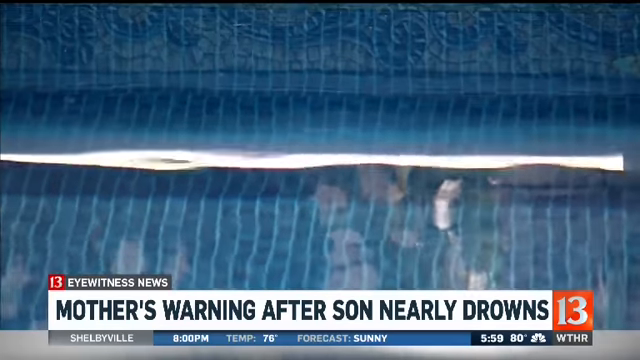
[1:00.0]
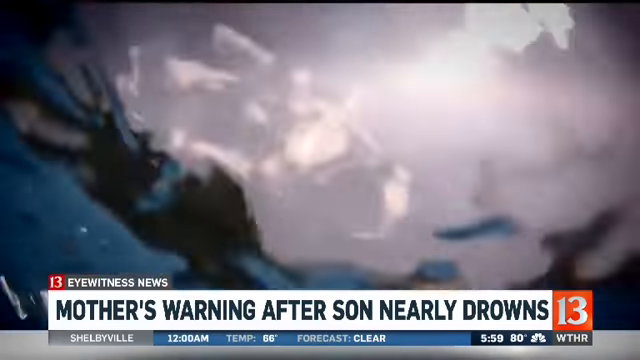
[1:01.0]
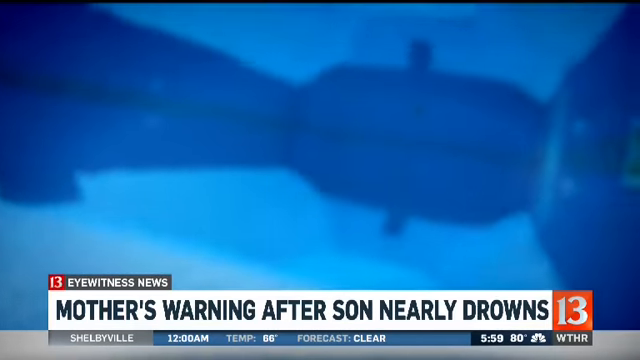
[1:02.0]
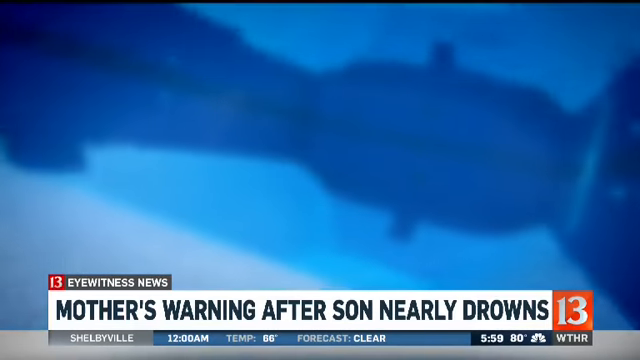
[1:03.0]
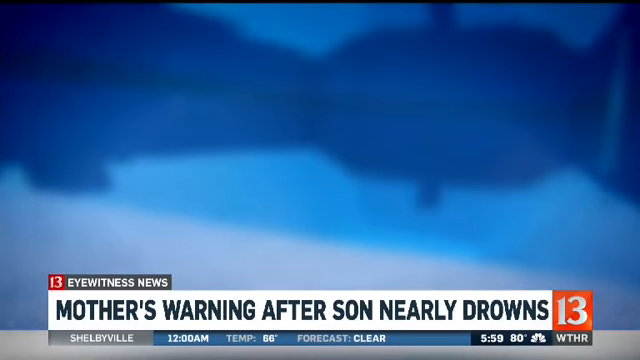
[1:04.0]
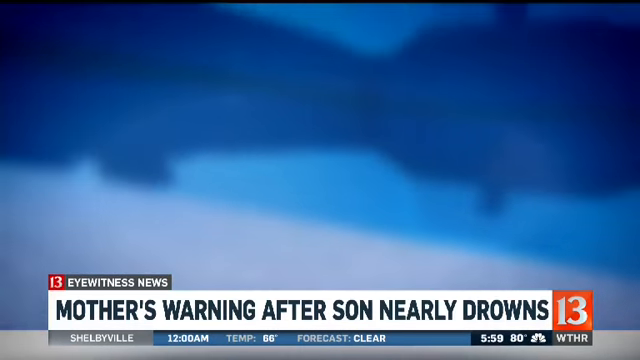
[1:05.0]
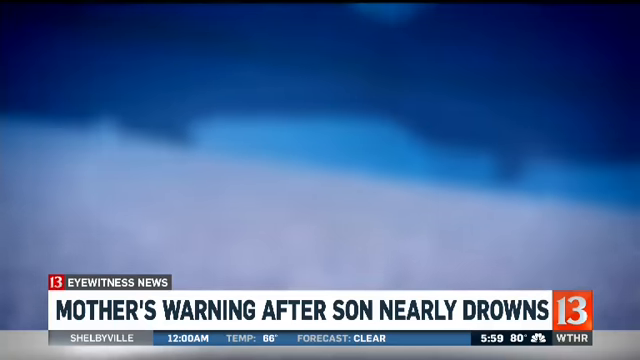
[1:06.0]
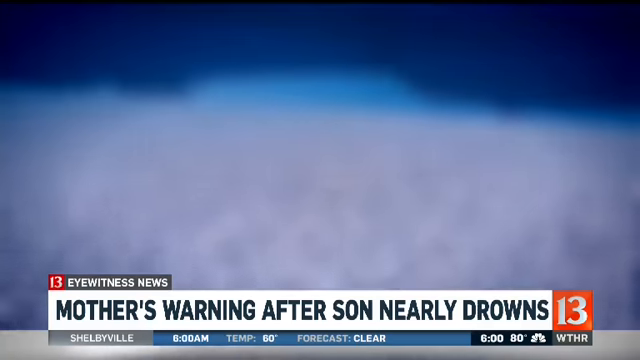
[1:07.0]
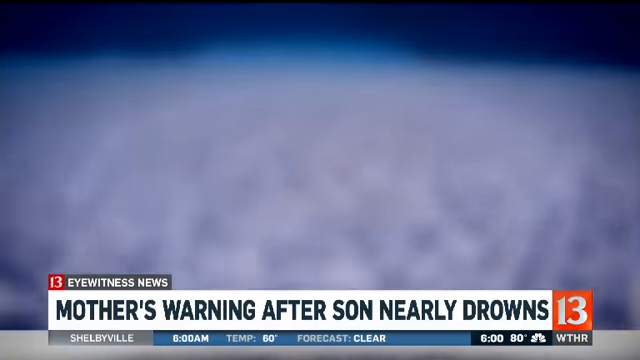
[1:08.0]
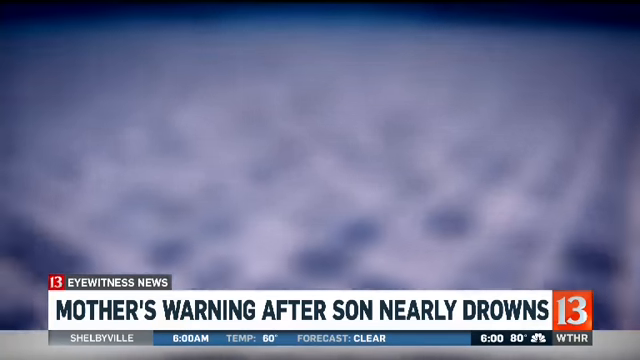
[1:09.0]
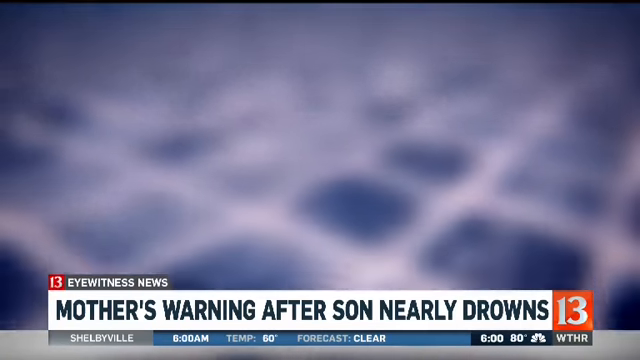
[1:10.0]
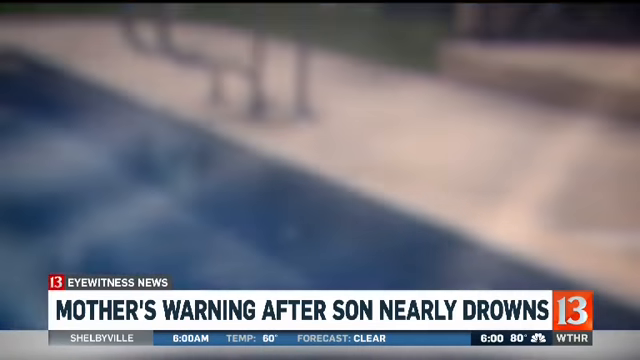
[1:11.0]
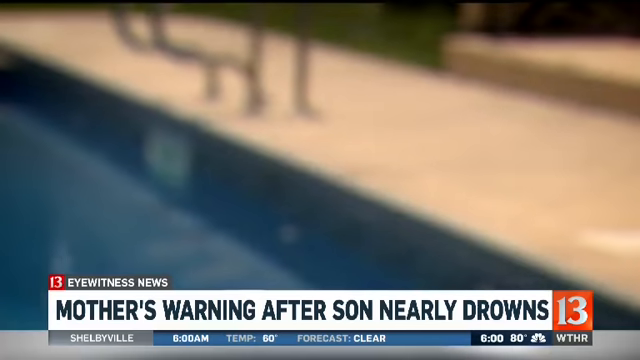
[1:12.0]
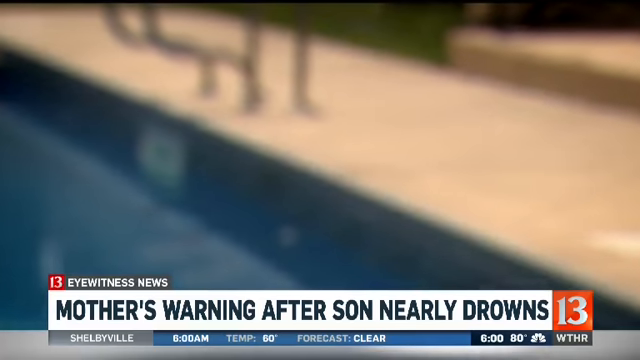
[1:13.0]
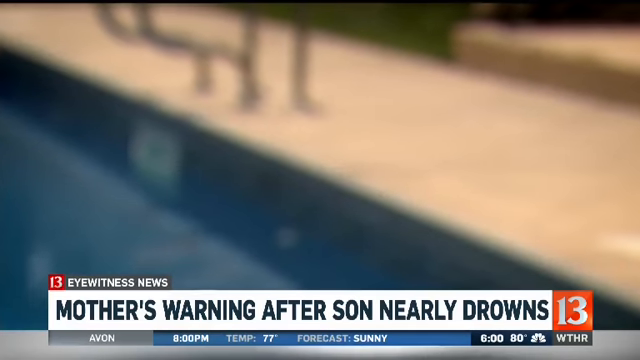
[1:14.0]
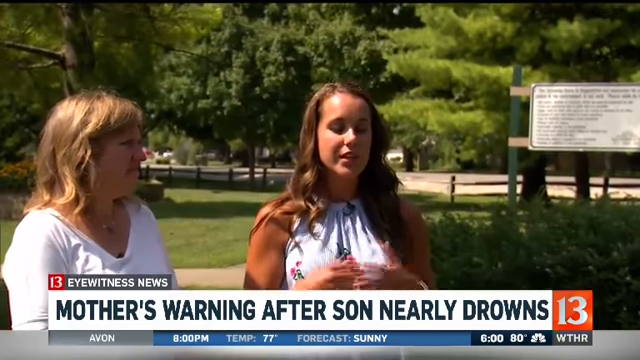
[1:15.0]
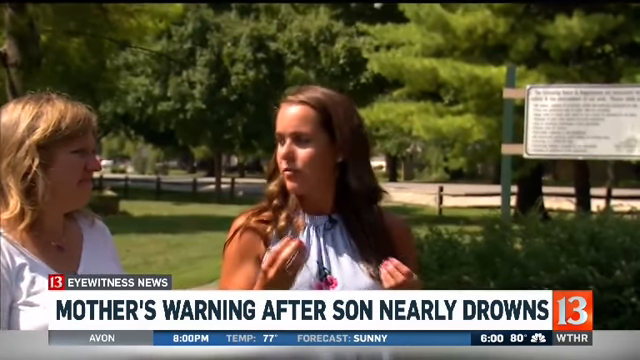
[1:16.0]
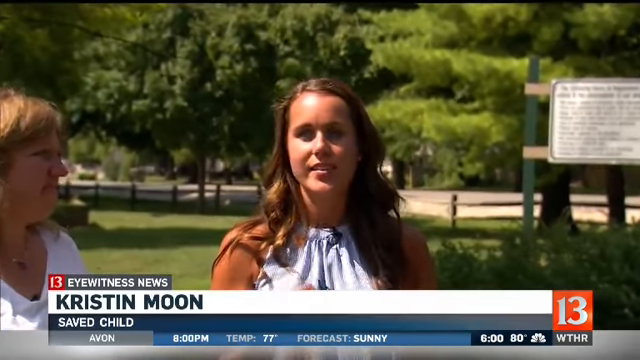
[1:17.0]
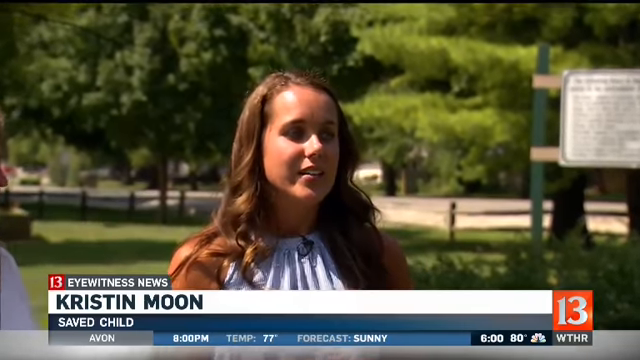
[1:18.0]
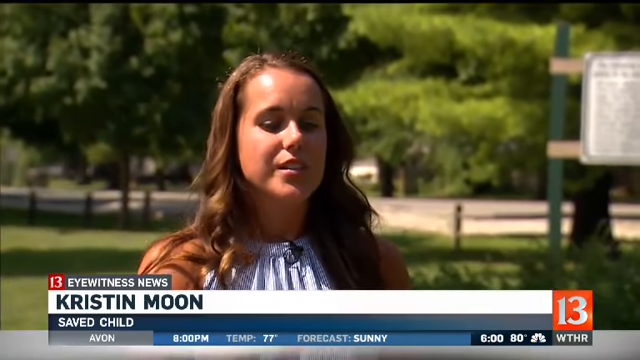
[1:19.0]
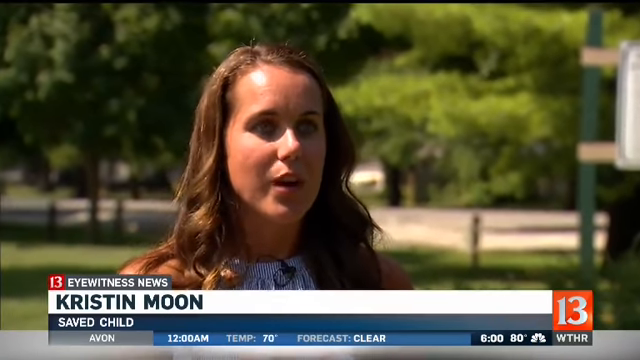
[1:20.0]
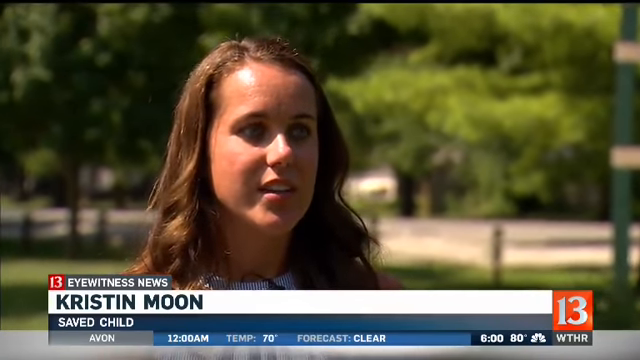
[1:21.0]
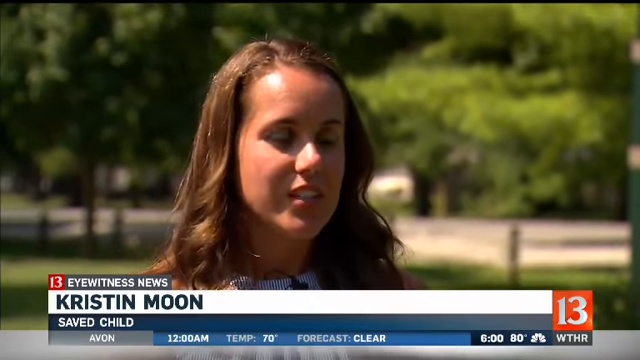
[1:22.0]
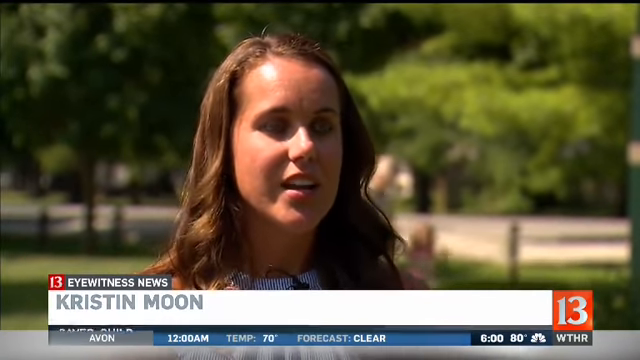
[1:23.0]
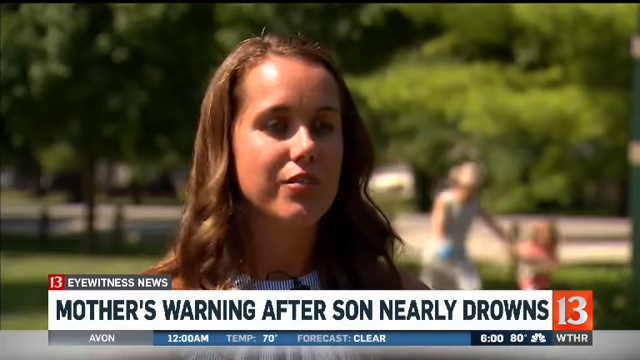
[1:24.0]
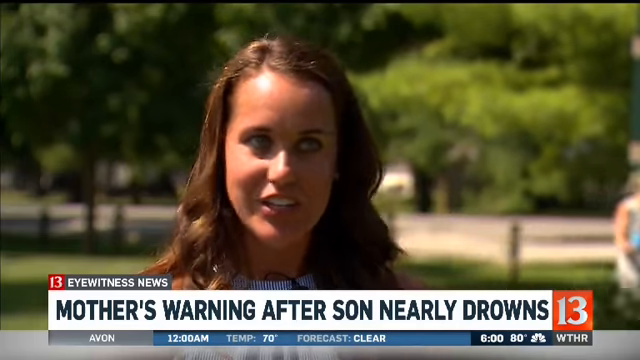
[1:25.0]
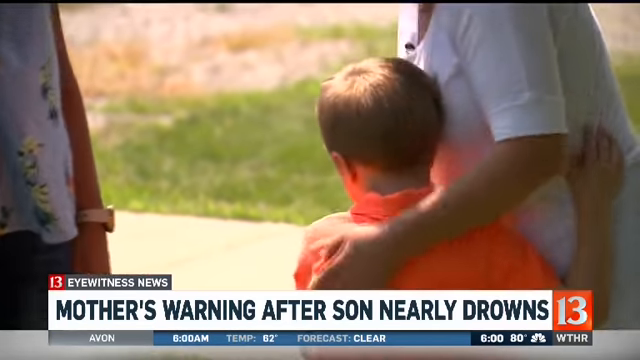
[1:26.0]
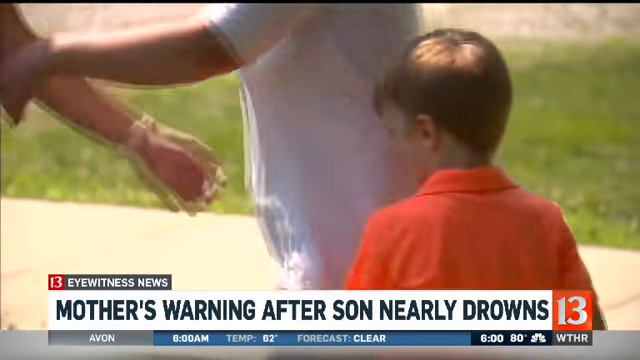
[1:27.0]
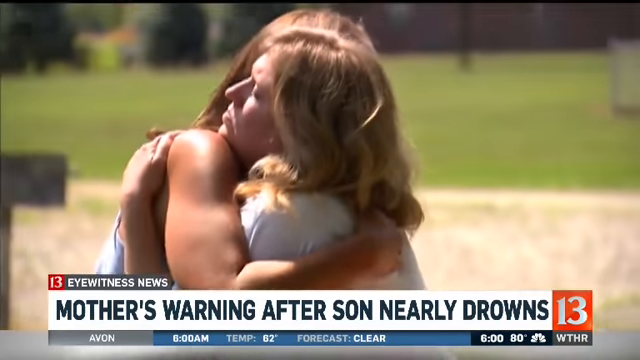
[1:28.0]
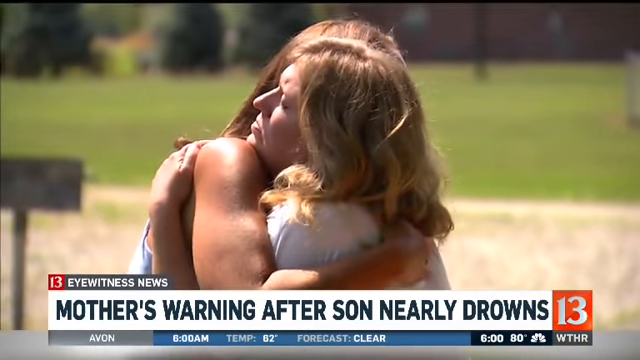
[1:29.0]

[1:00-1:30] Pool water in a swimming pool appears with the text "channel 13 eyewitness news mother's warning after son nearly drowns." A view from in the water at the bottom of the pool shows, apparently, what drowning looks like, followed by the surface of the pool. A woman in a white top appears; her name is Kirsten Moon, and she saved the child, apparently by doing CPR on him. She looks maybe late 20s to early 30s, has a microphone attached to her top, brunette hair and light-colored eyes. There are a lot of trees in the background, and it is daytime with sunlight. The text "channel 13 eyewitness news mother's warning after son nearly drowns" appears. The mom hugs the boy and then hugs the woman who saved her son.